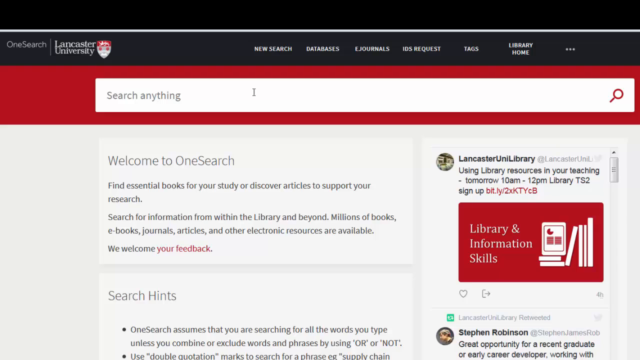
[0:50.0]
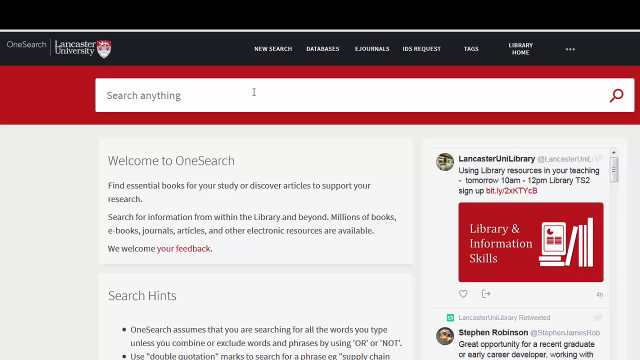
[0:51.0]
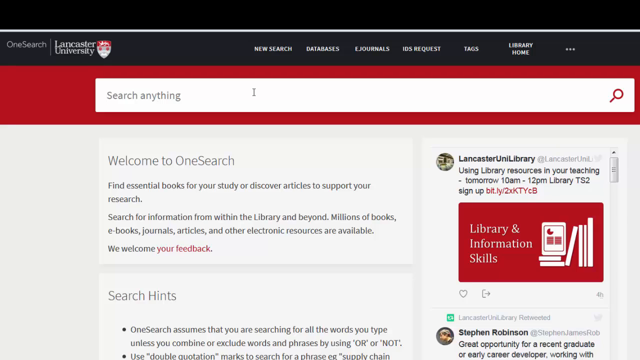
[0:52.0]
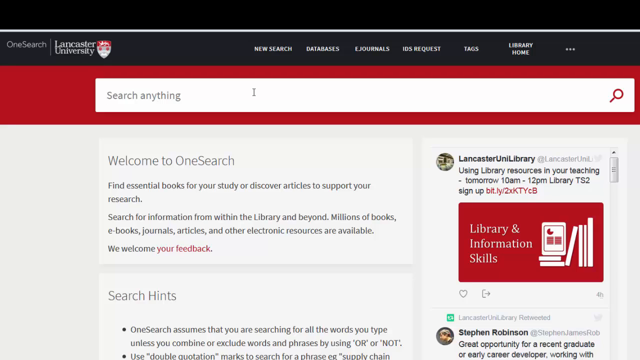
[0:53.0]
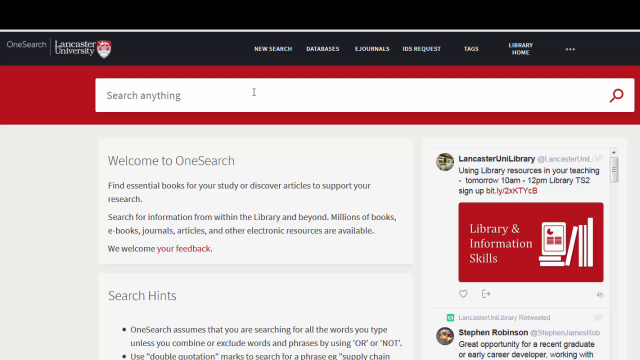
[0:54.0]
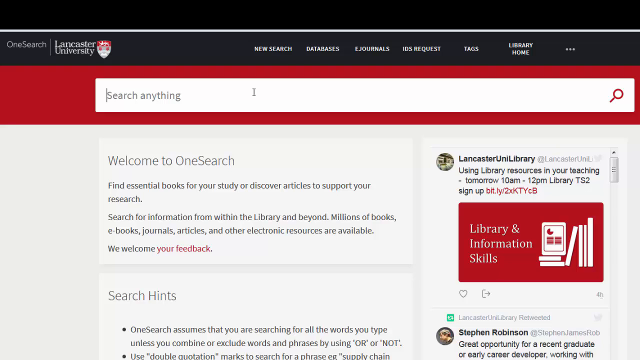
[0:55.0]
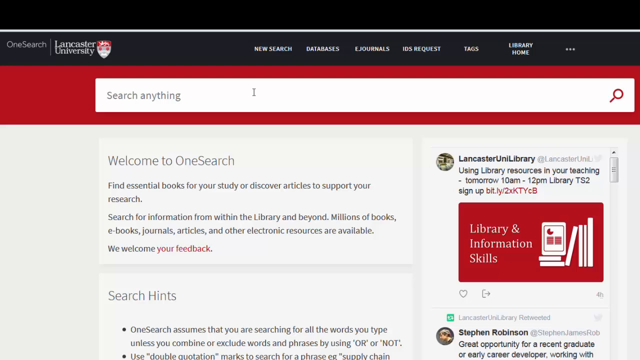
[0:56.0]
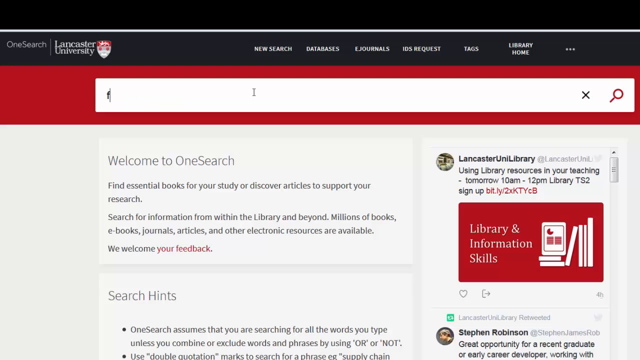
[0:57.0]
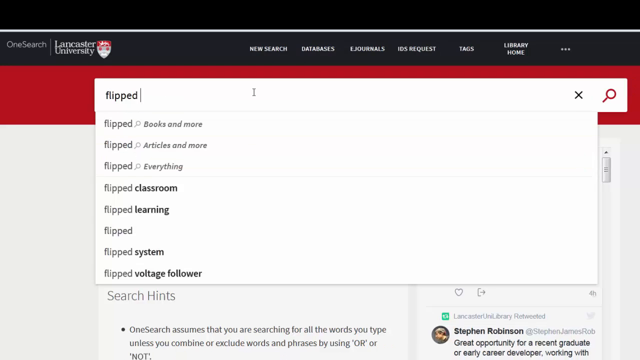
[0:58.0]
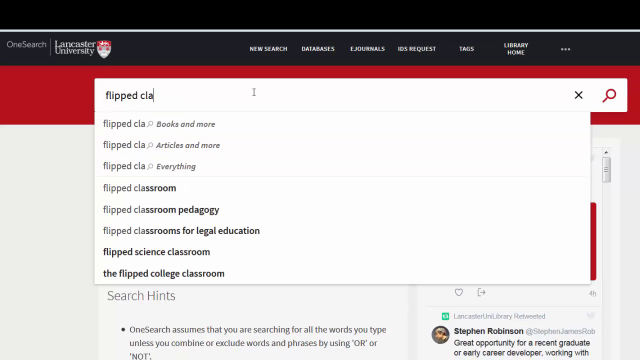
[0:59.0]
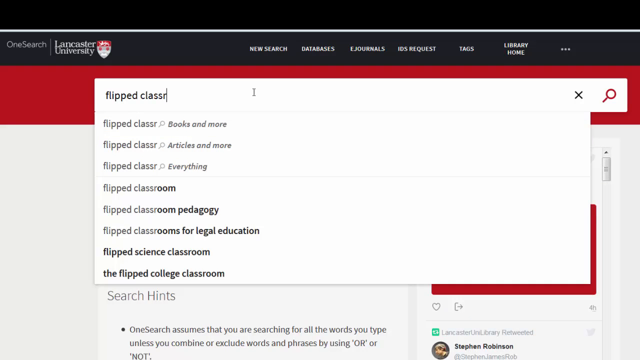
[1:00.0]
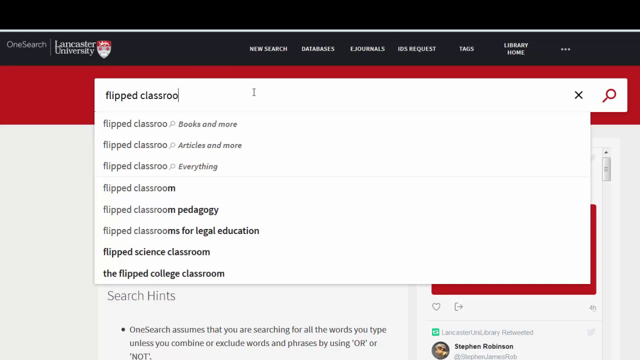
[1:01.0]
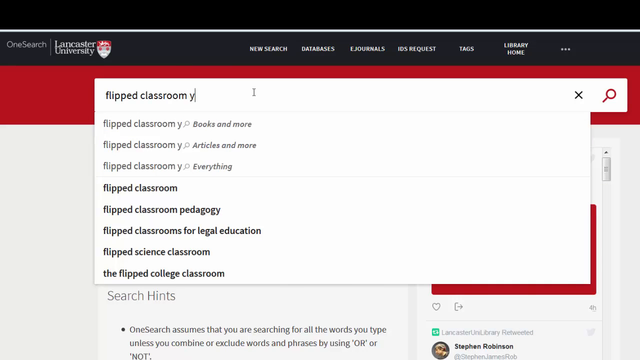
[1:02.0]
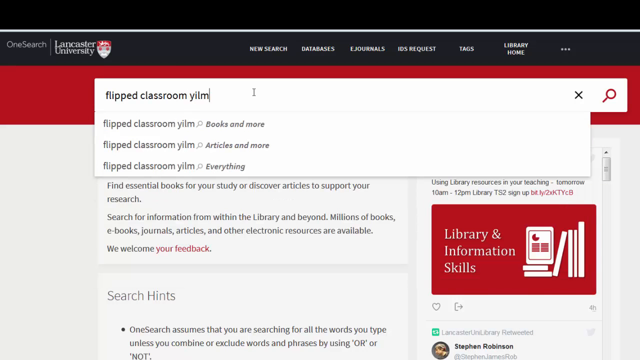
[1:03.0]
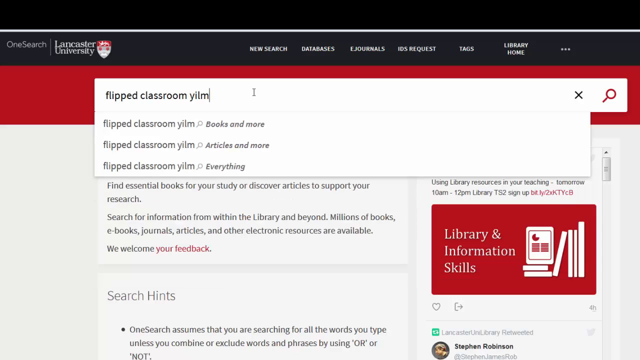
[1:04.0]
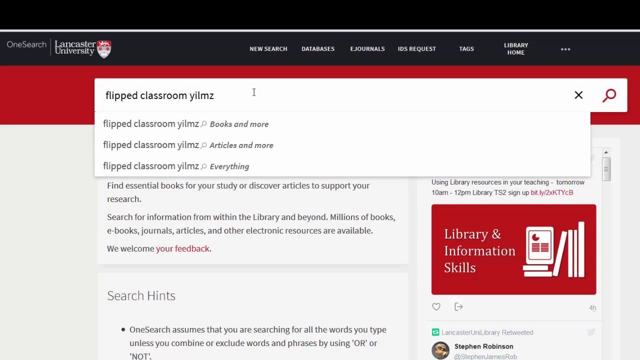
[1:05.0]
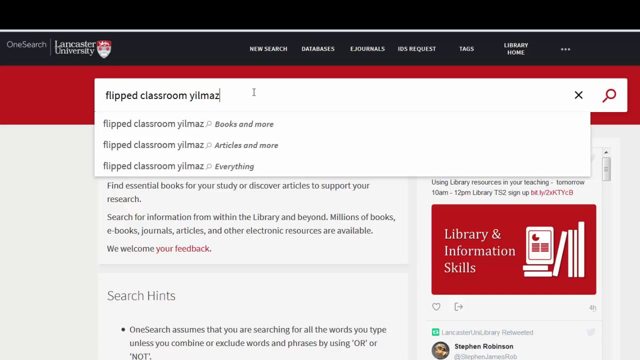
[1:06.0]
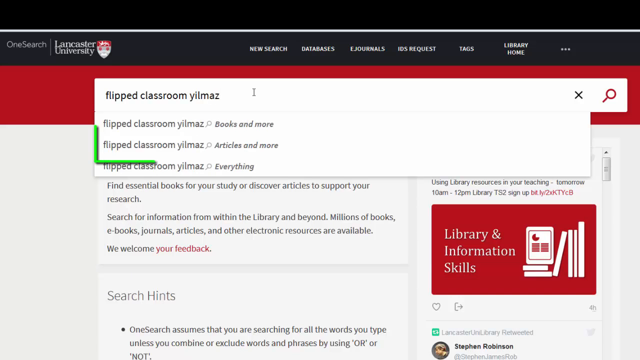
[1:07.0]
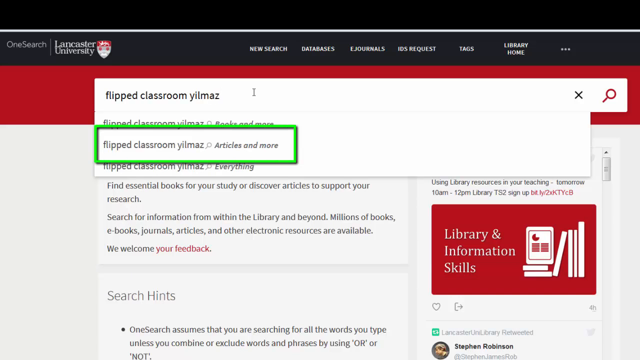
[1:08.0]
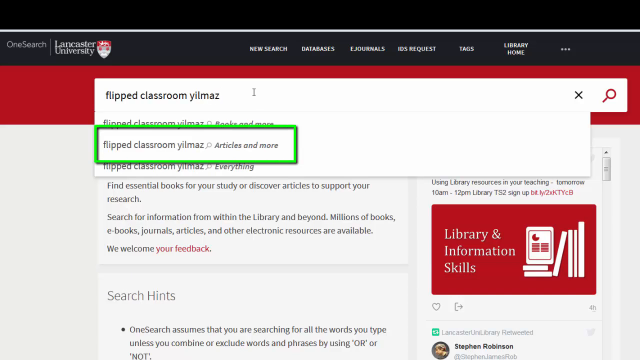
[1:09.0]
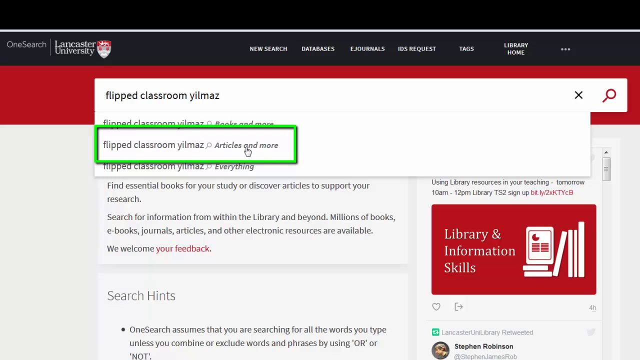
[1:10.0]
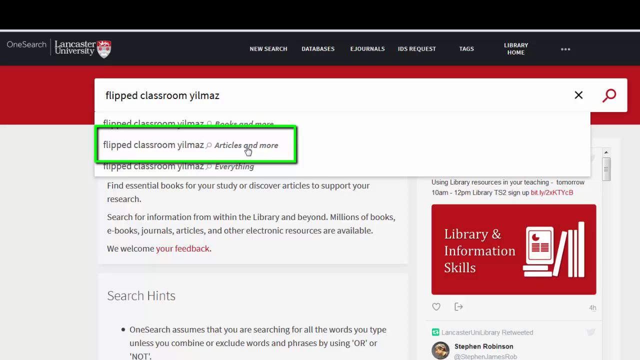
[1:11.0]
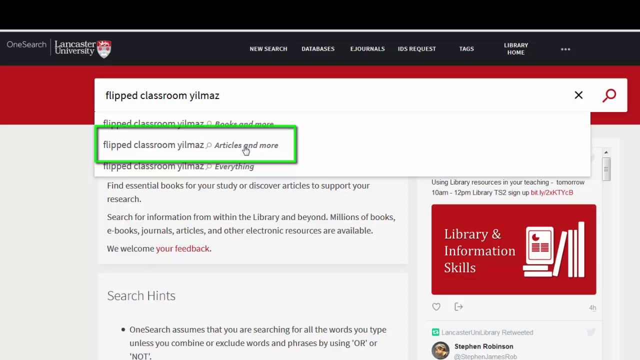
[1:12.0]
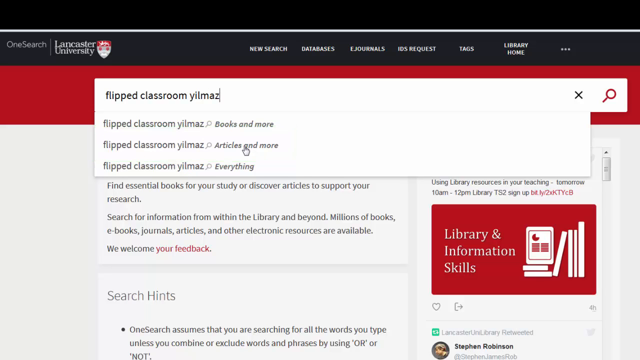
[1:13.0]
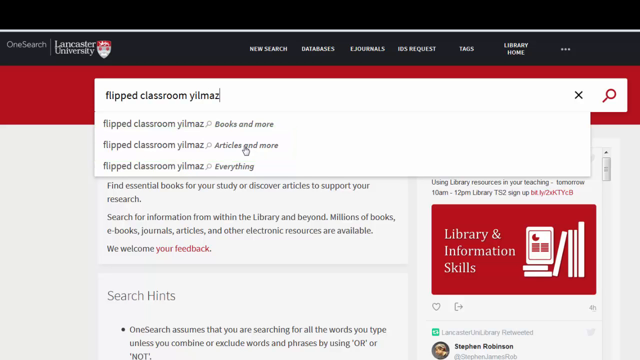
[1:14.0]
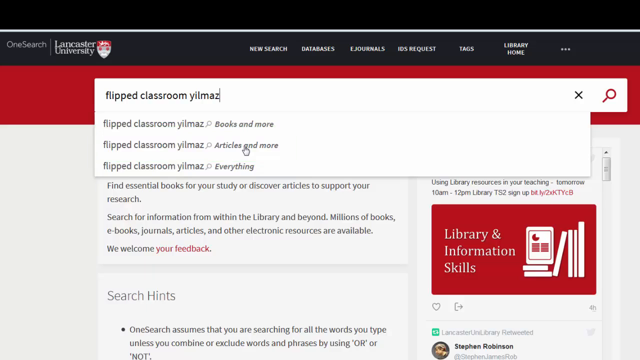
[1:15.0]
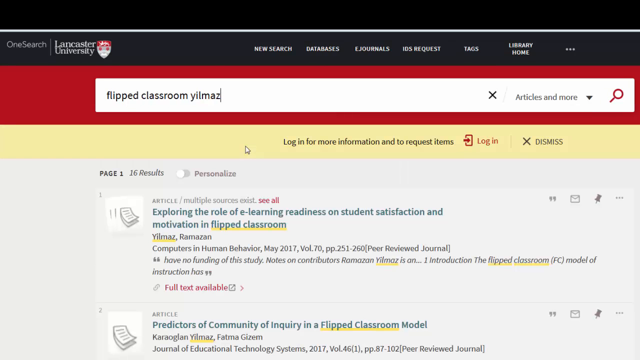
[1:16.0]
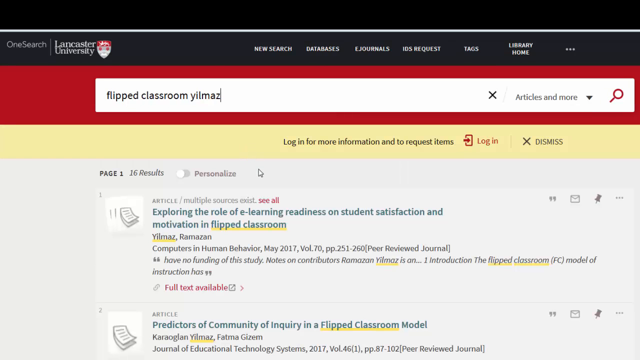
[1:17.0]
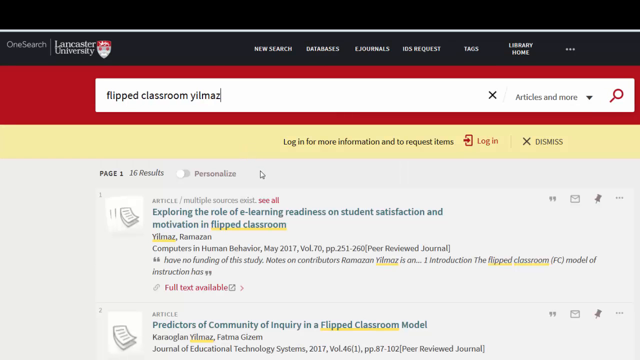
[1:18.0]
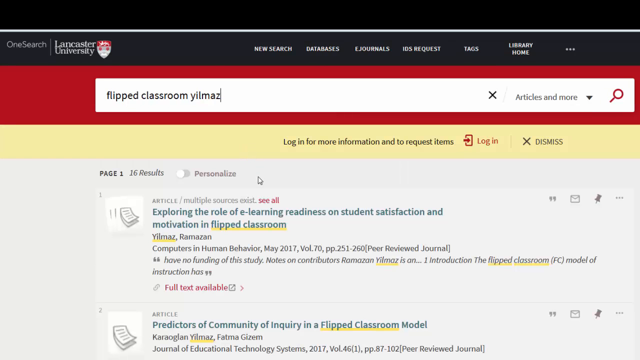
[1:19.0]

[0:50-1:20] The front page of what looks to be the Lancaster University website is shown, apparently in black at the very top with a row of tabs. The visible tabs in the black bar are "new search", "databases", "journals", "e-journals", "request" and "library home". Below this is a red area with a large white search bar. Under it, text reads "welcome to OneSearch. Find essential books for your study or discover articles to support your research. Search for information from within the library and beyond. Millions of books, e-books, journals, articles and other electronic resources are available. We welcome your feedback." "Search hints" appears underneath this, and to the right is what looks like a feed from a social platform with the words "library and information skills", apparently a post about library and information skills.